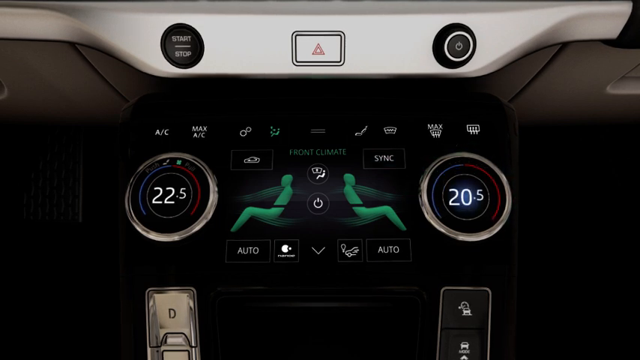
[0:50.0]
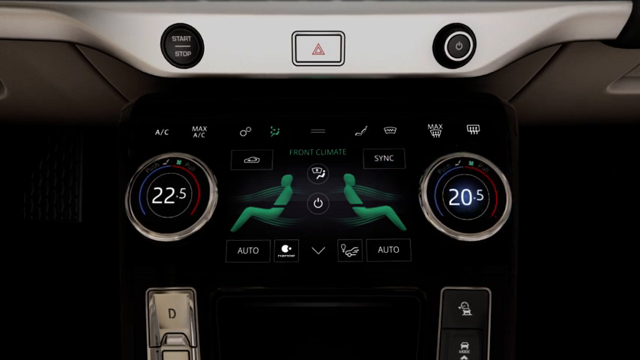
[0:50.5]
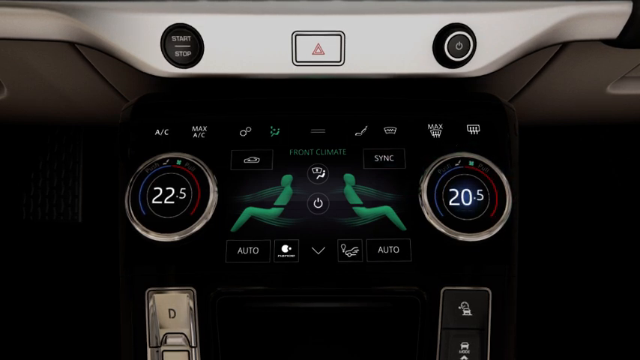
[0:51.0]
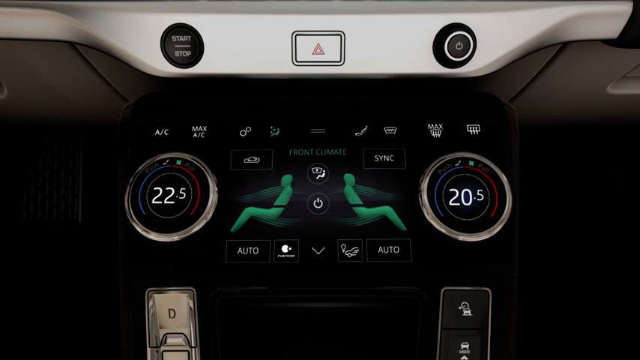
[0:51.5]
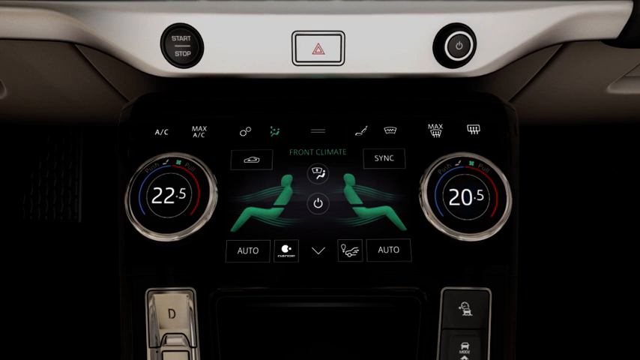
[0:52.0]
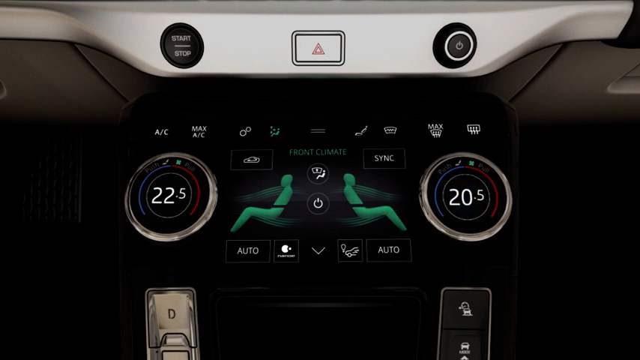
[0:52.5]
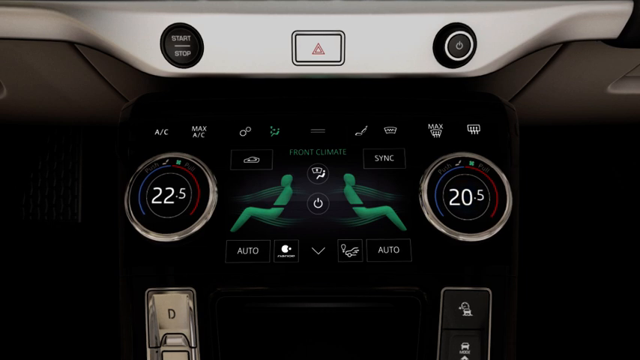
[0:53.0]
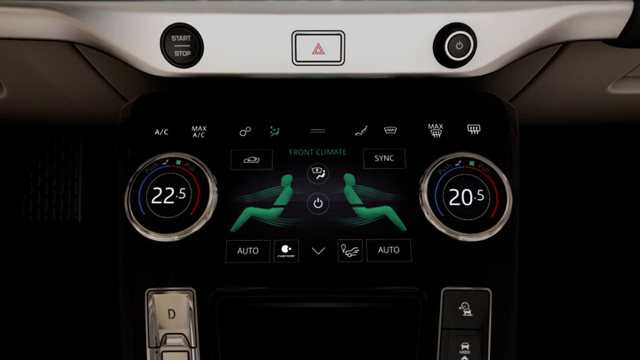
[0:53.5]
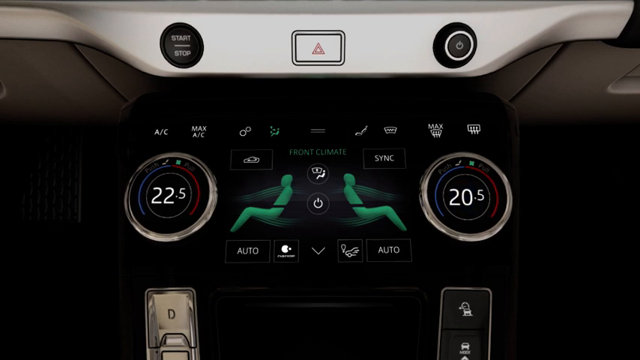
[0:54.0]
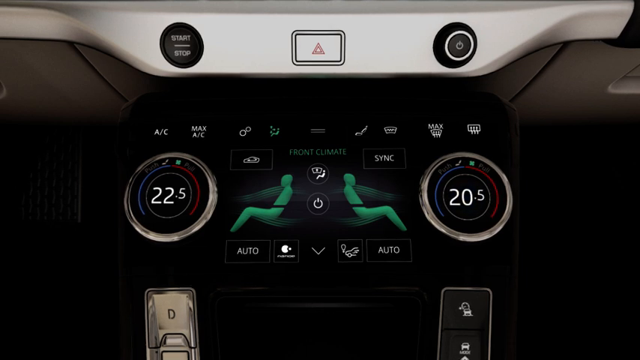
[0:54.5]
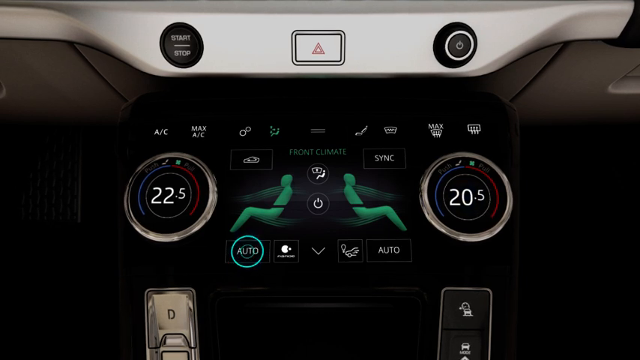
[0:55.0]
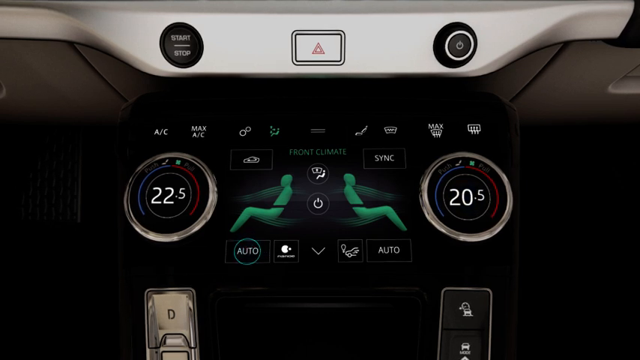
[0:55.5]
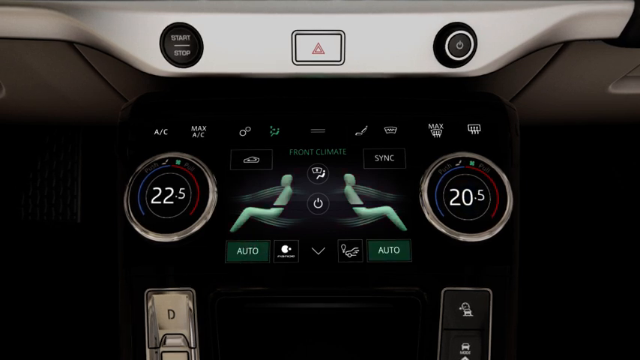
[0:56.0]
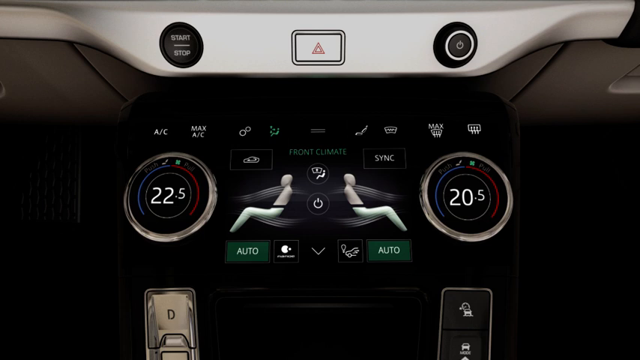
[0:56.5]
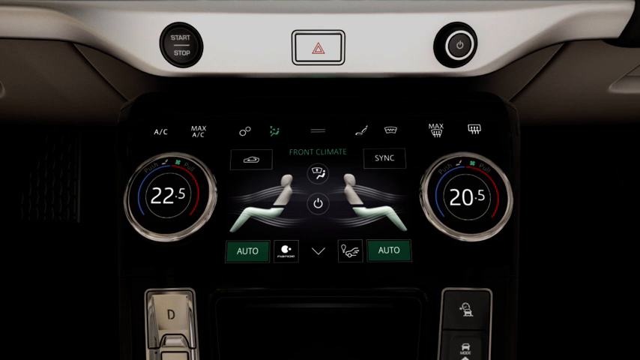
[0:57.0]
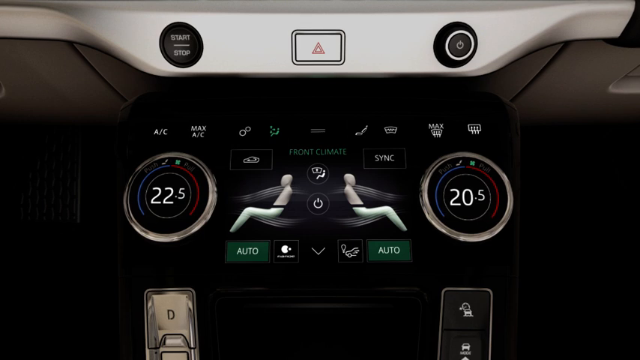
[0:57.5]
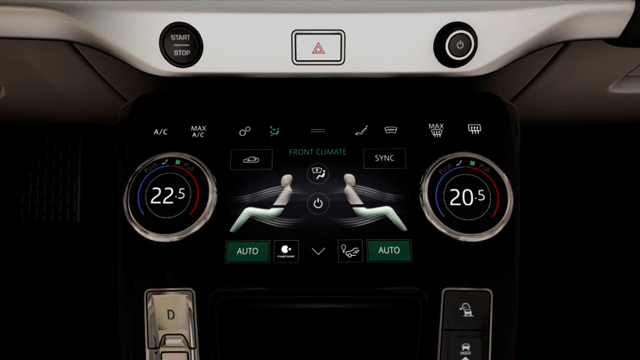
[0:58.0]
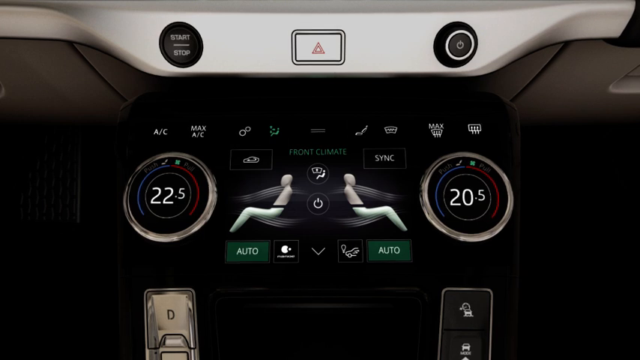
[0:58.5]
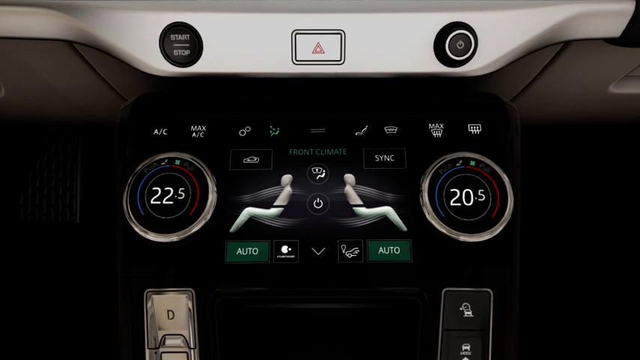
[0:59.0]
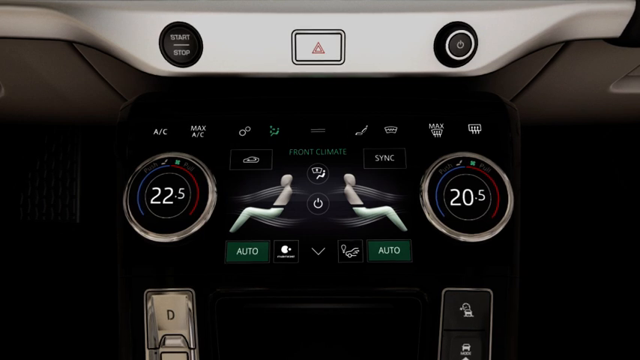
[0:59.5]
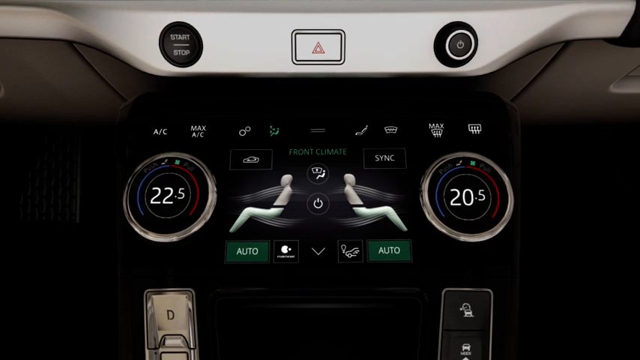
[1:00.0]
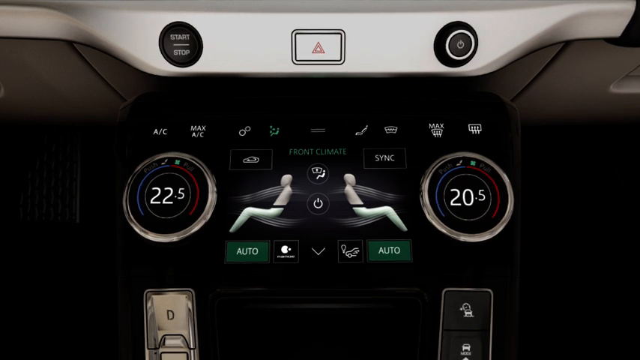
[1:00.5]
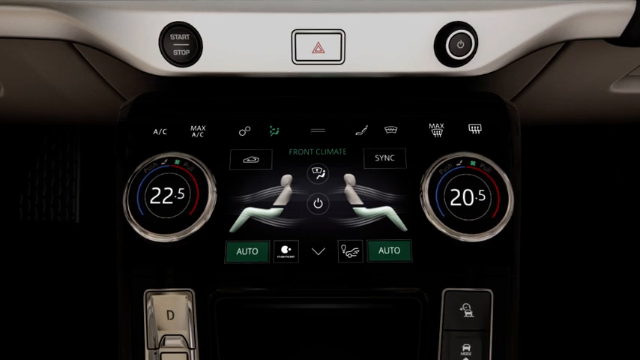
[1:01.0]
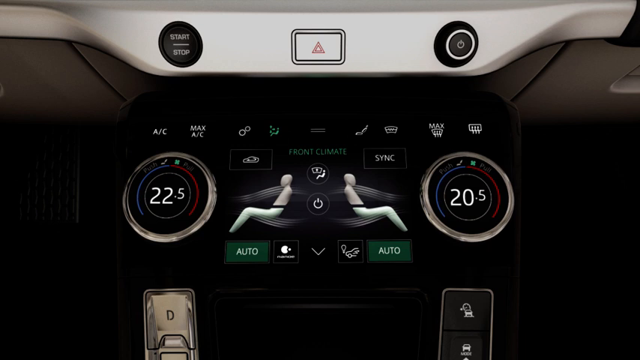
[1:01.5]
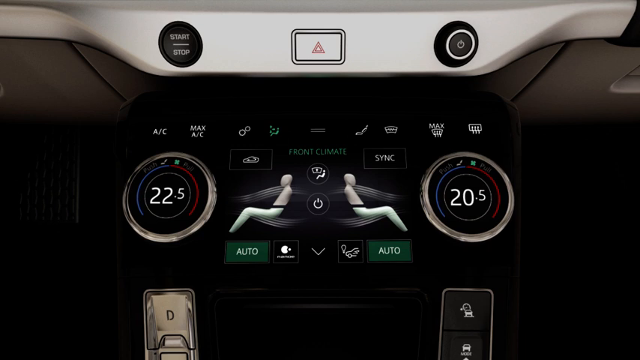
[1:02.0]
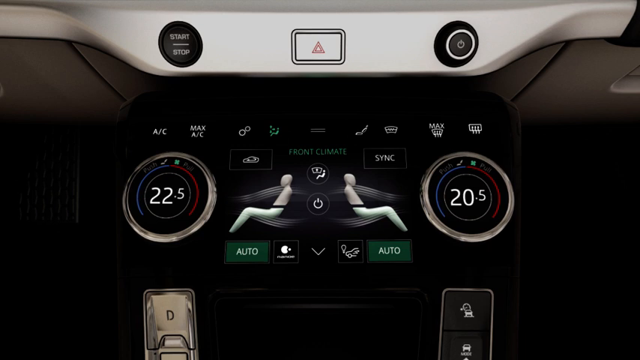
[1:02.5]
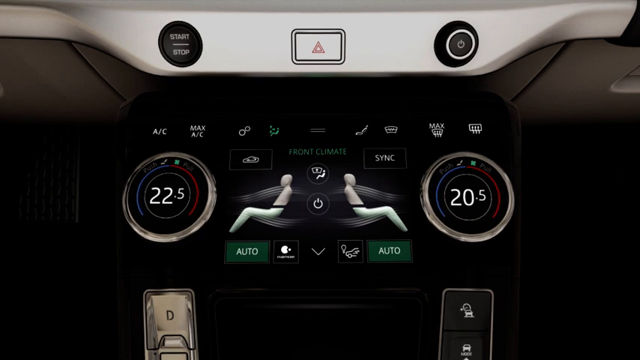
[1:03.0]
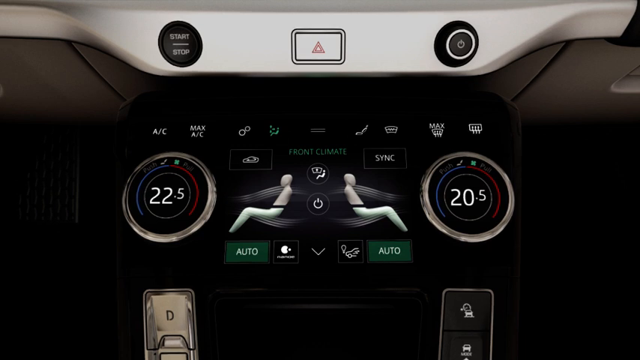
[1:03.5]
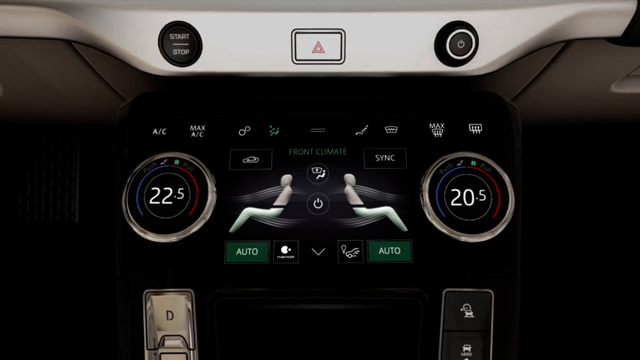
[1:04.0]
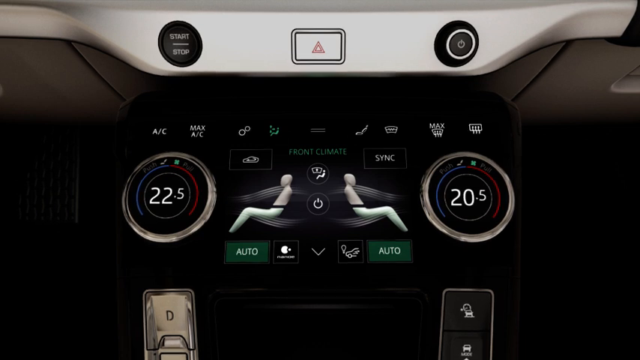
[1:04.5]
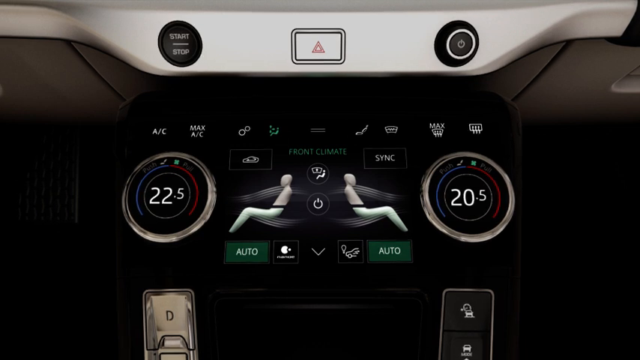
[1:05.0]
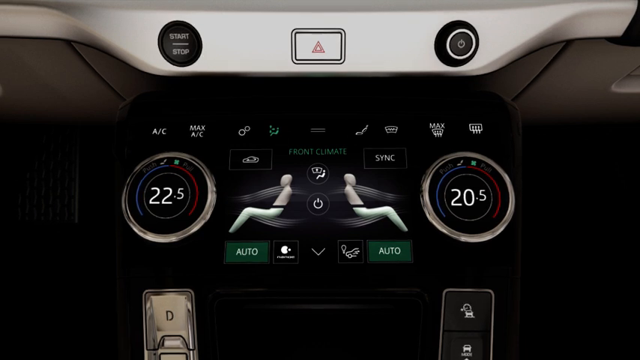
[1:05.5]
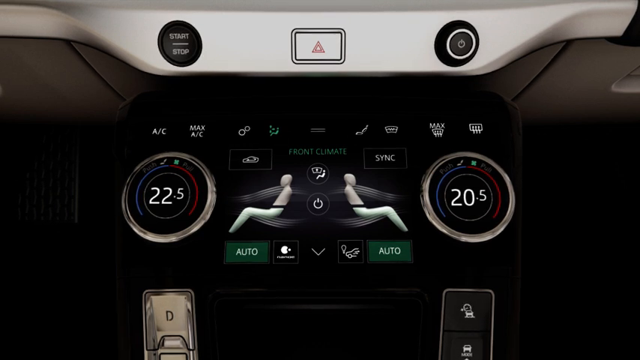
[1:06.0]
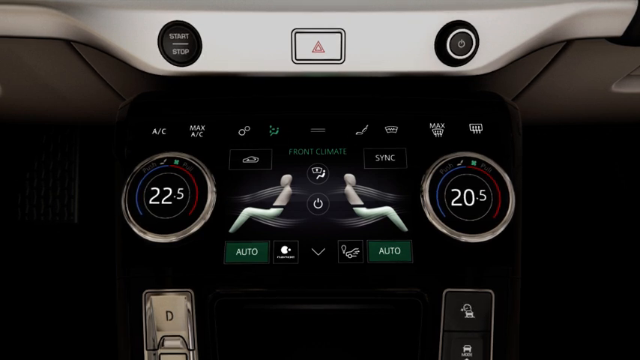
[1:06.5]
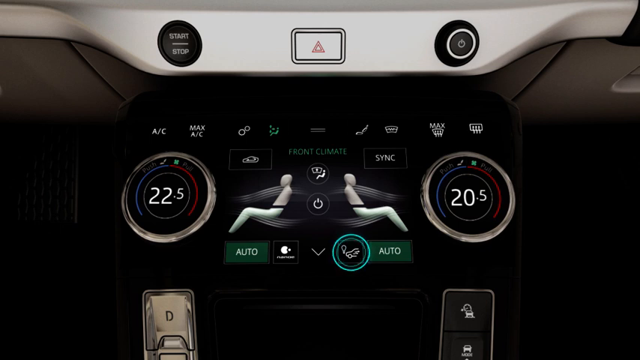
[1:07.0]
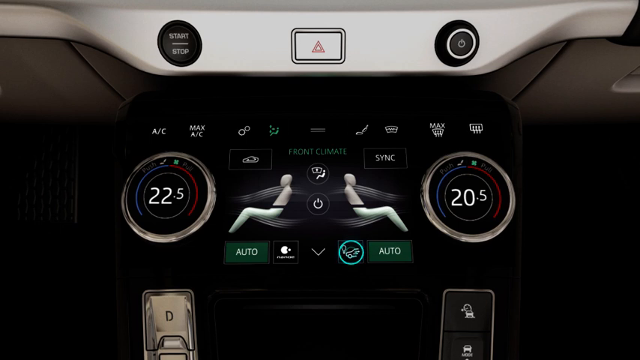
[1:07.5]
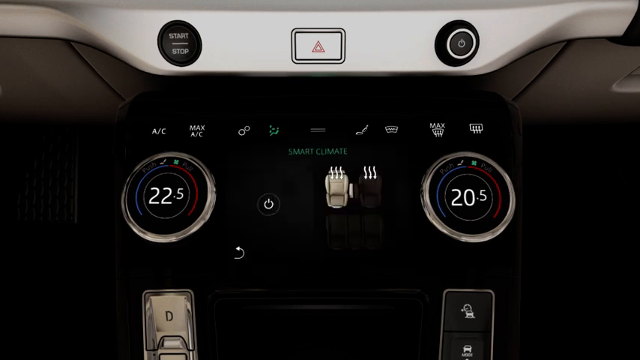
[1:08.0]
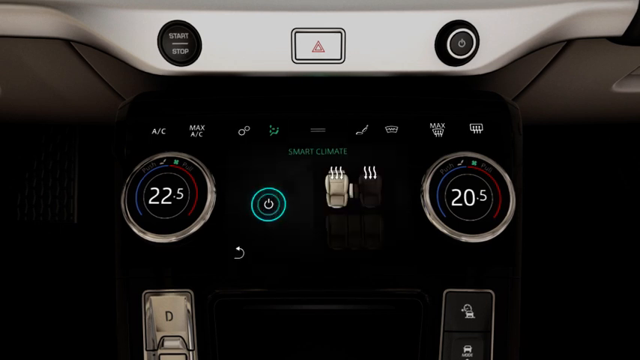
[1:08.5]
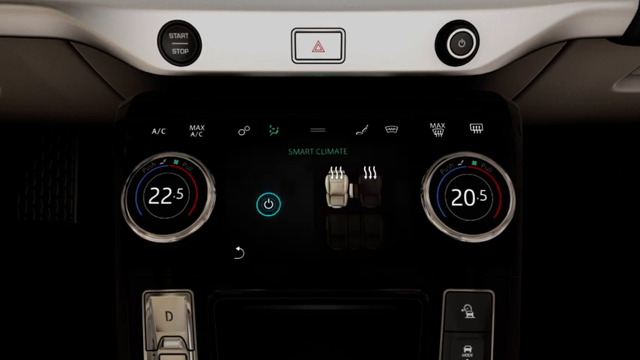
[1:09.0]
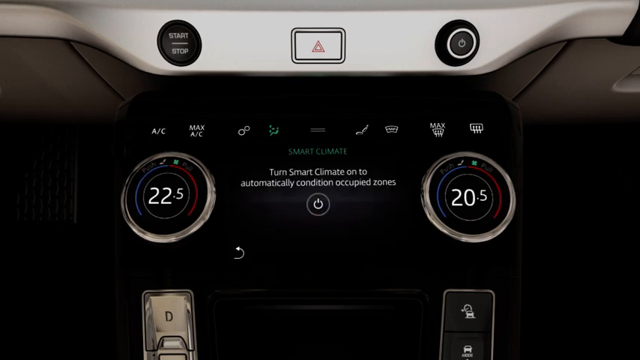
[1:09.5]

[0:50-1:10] The buttons appear to have been synced at some point, as the passenger symbols are now both green. Below the passenger symbols are two "auto" labels, one on each side, each with a different symbol: the left one has a symbol to its right and the right one has a symbol to its left. For a while nothing much happens. The passenger symbols have wavy white lines at top and bottom, perhaps indicating some sort of current. The button to the left of the right-hand "auto" is outlined with a light green circle, which flashes and shrinks within the button. The central panel then changes to a different image. At the bottom left is a return arrow symbol, a kind of semicircle with an arrow on the end pointing left. Above it is a green circle with an inset, more green coloring, and a power button. On the other side is an image of the vehicle's five seats, and at the top center of the unit is "smart climate". Both front seats now have wavy lines running into them, and the left-hand seat is now white, while the other seats are darker, suggesting they have not been activated.